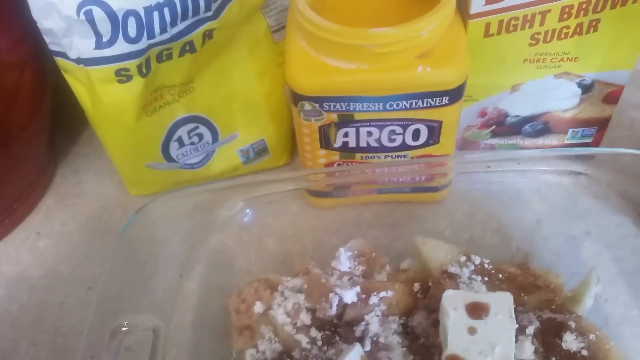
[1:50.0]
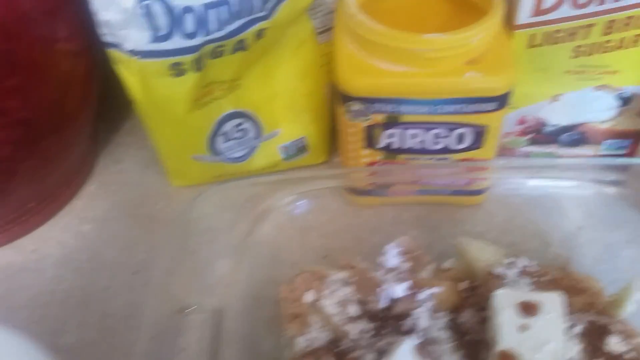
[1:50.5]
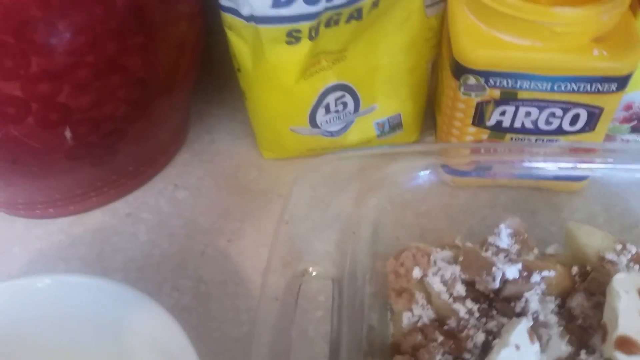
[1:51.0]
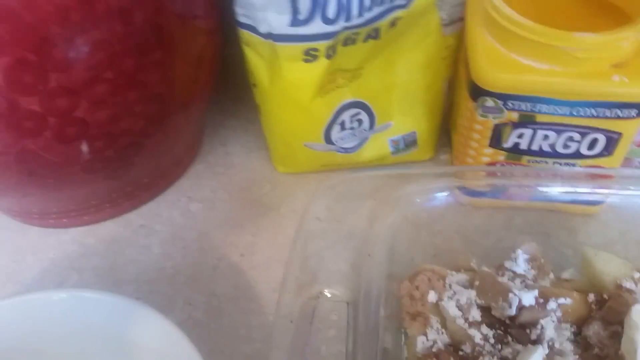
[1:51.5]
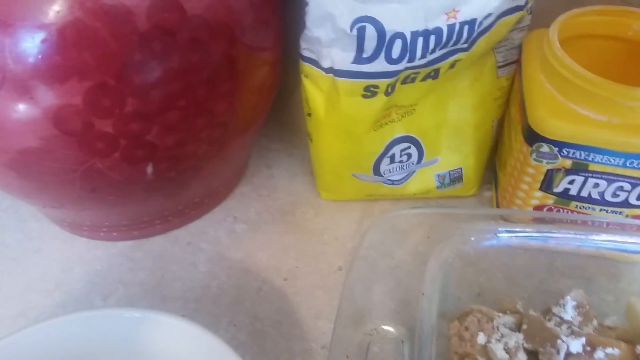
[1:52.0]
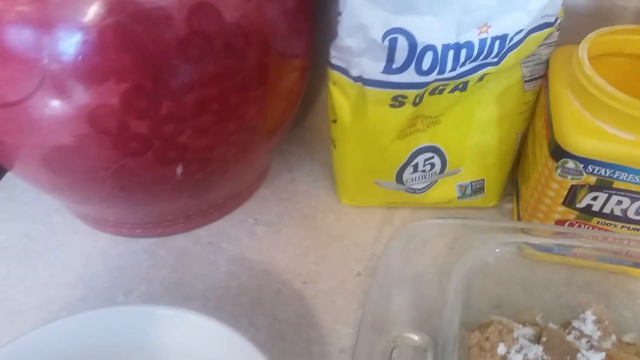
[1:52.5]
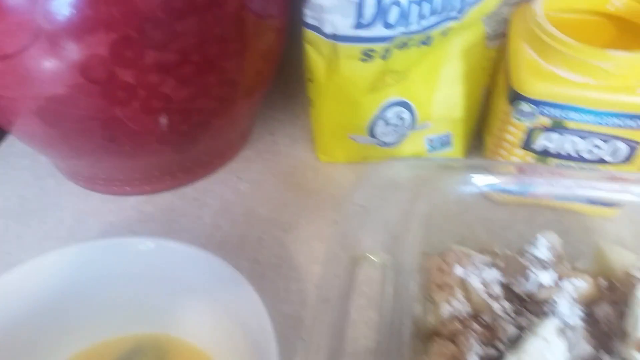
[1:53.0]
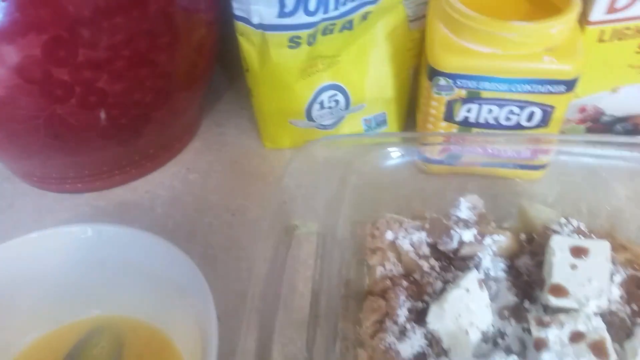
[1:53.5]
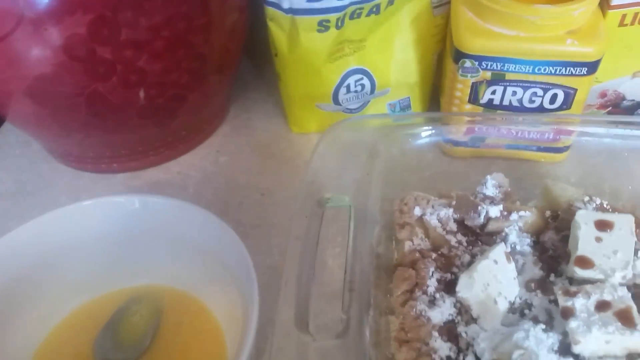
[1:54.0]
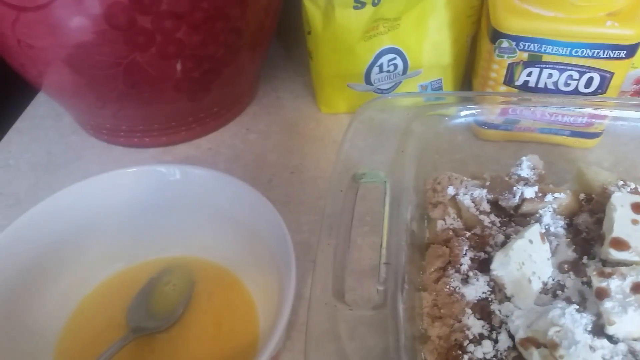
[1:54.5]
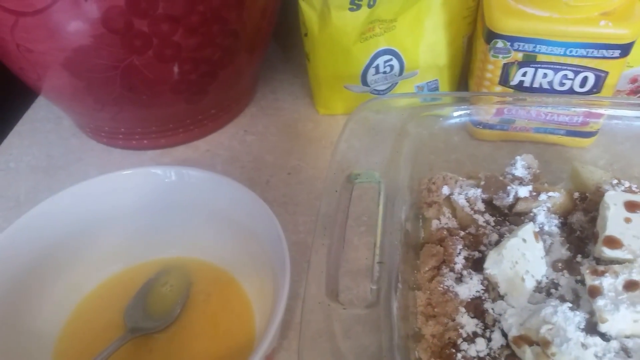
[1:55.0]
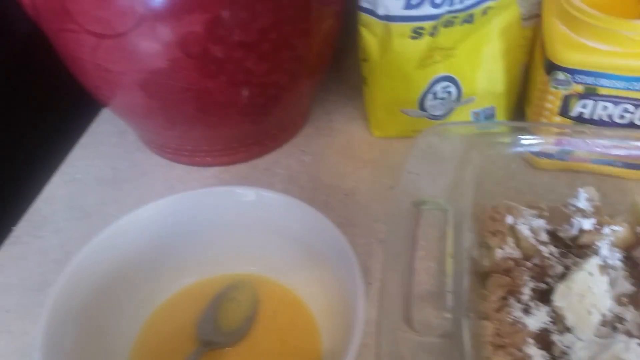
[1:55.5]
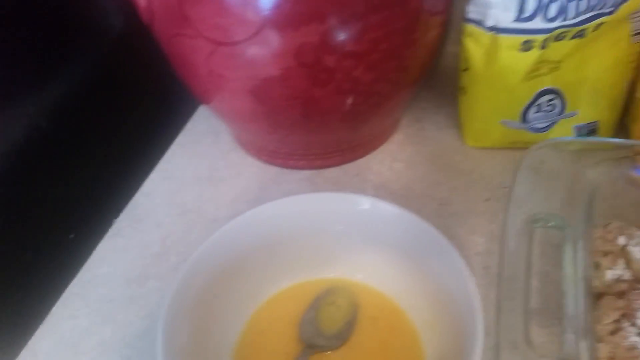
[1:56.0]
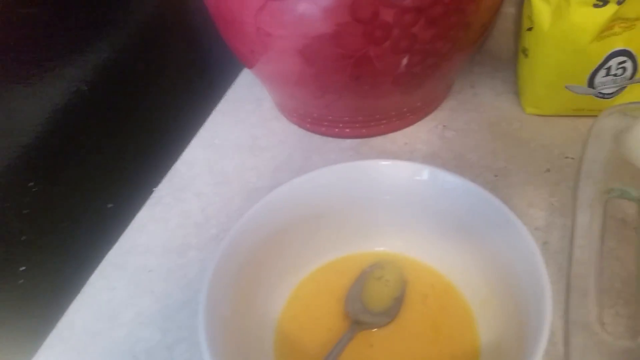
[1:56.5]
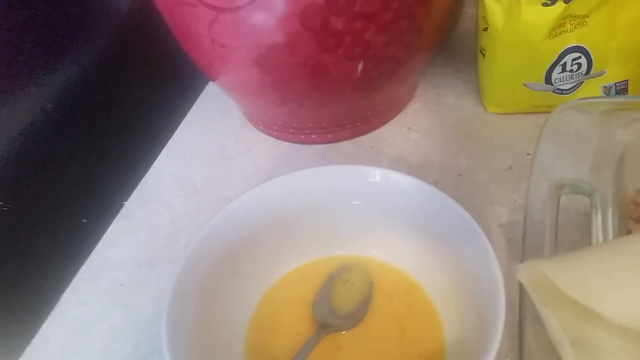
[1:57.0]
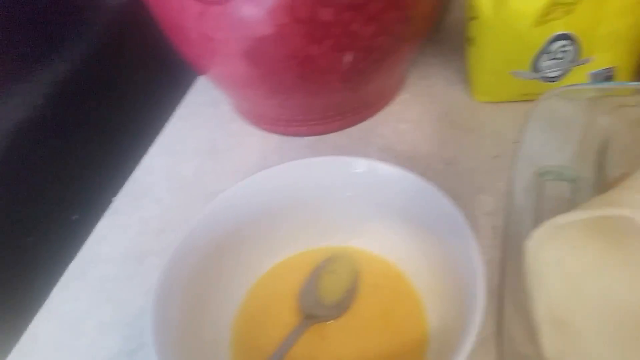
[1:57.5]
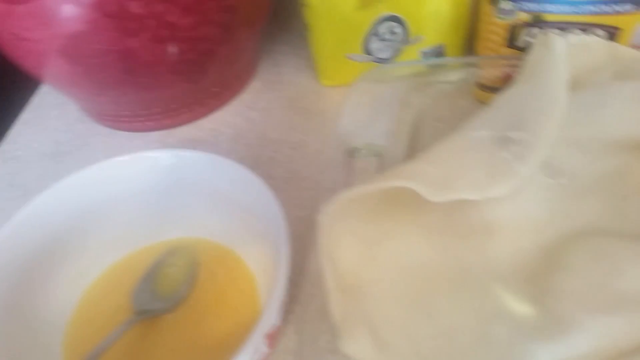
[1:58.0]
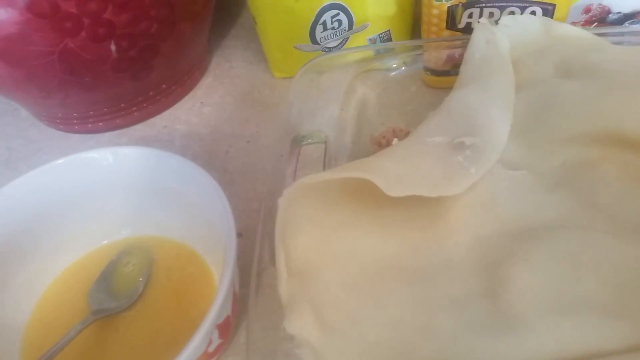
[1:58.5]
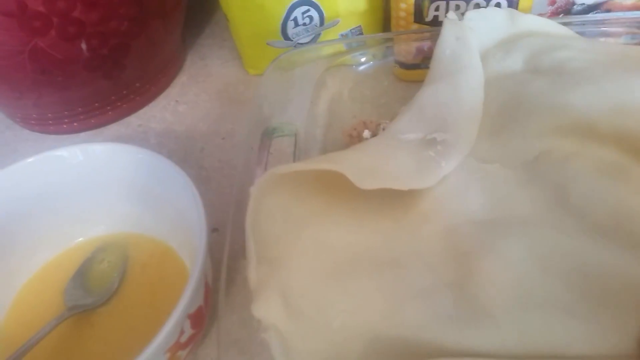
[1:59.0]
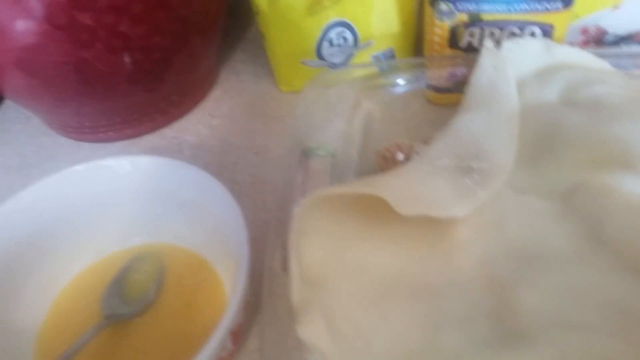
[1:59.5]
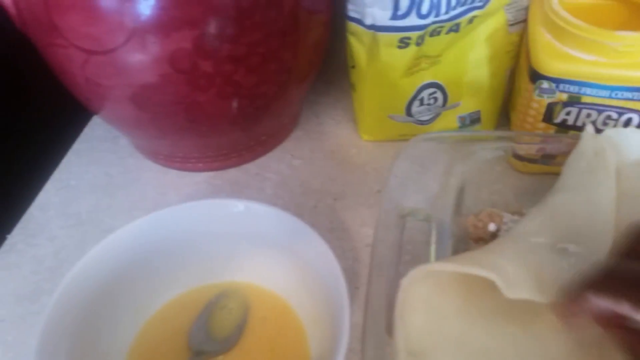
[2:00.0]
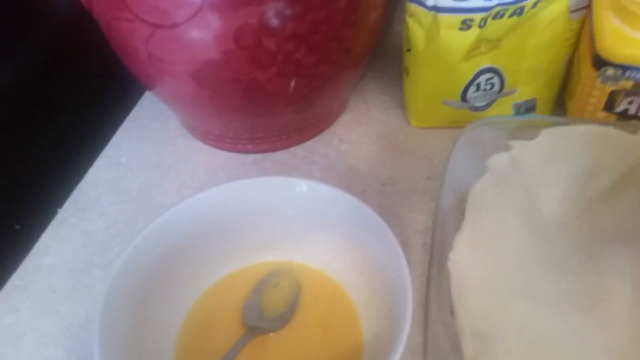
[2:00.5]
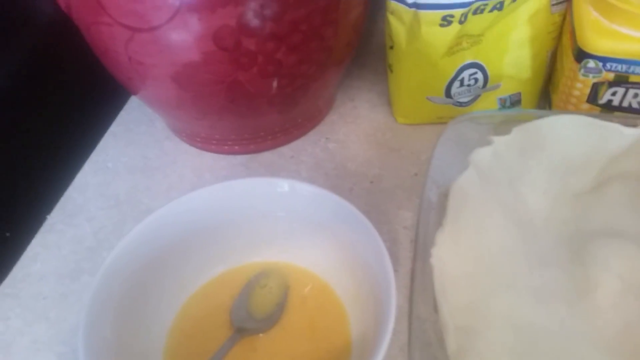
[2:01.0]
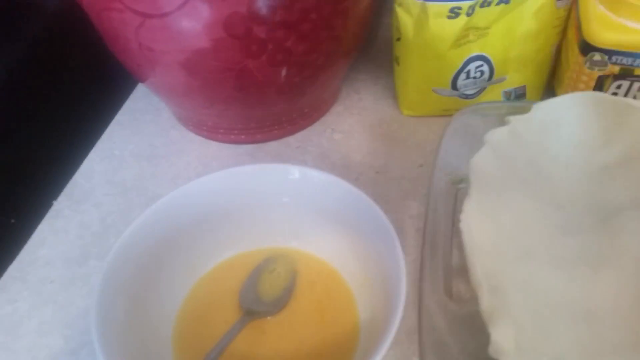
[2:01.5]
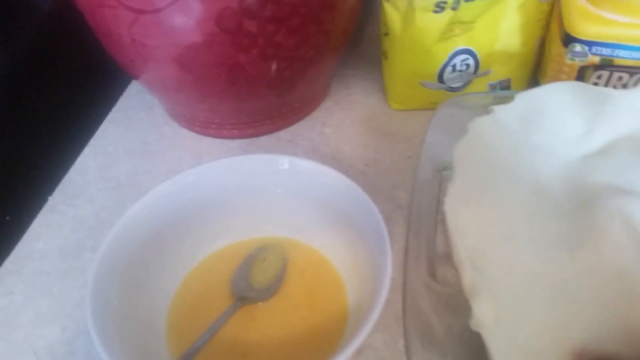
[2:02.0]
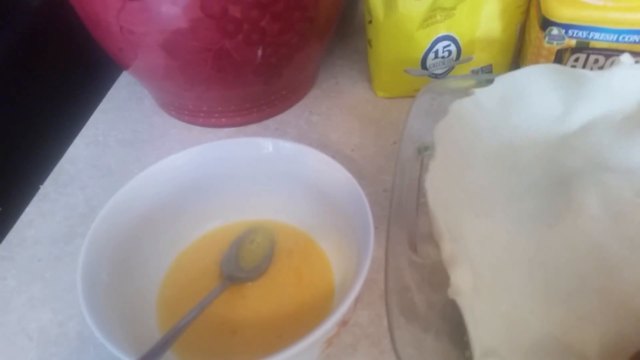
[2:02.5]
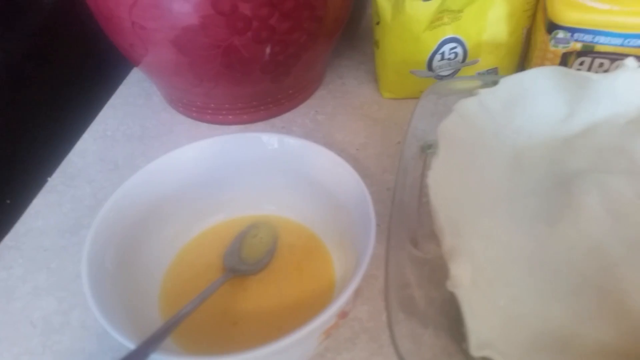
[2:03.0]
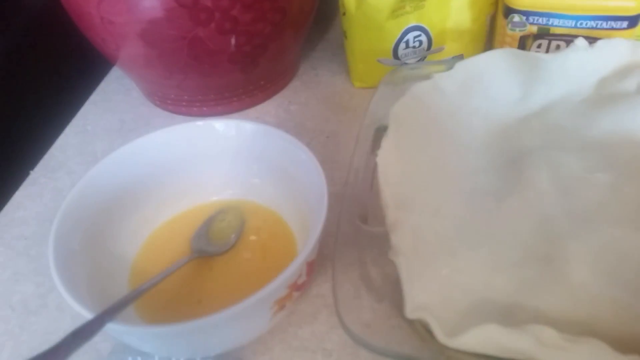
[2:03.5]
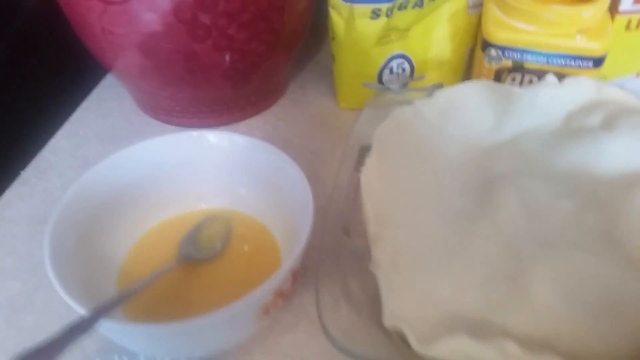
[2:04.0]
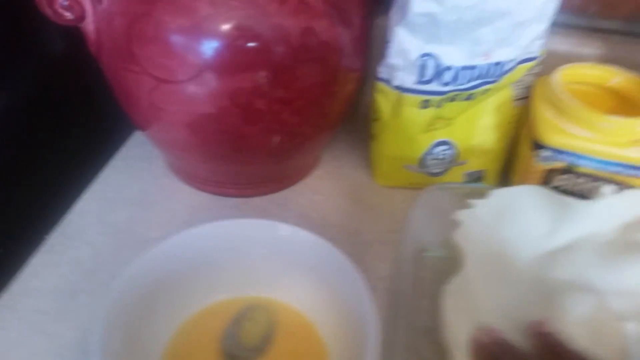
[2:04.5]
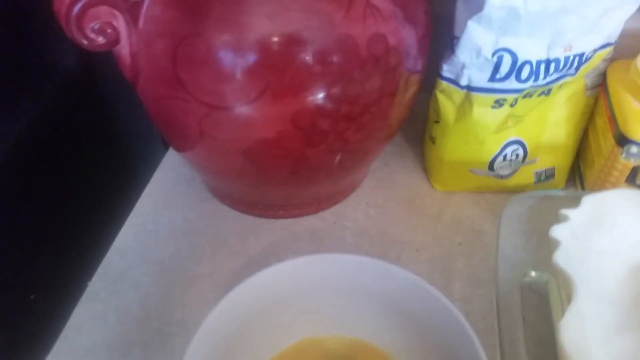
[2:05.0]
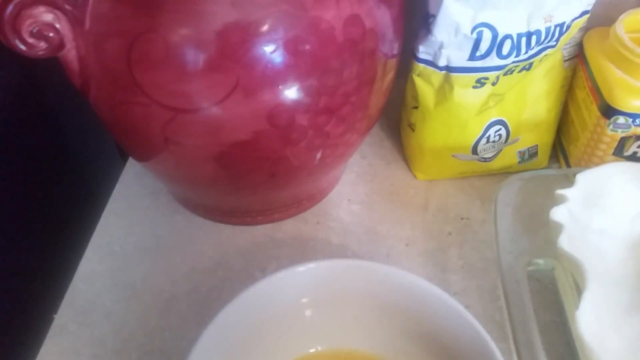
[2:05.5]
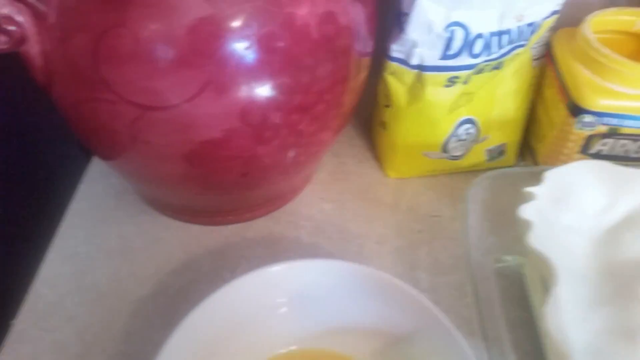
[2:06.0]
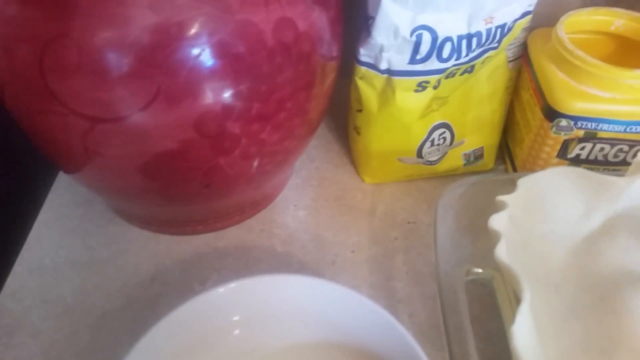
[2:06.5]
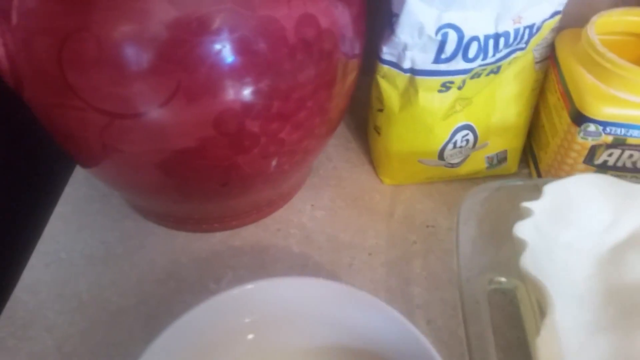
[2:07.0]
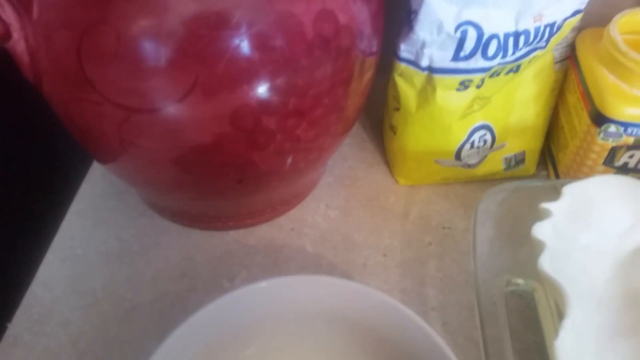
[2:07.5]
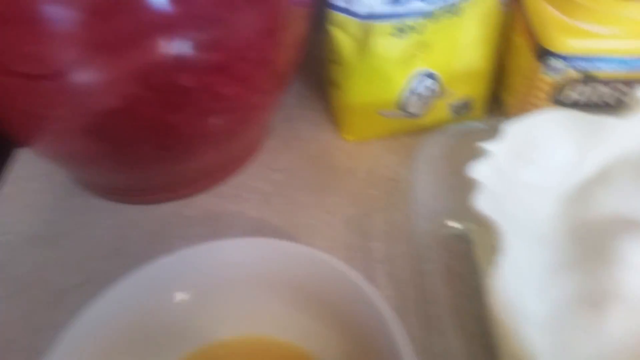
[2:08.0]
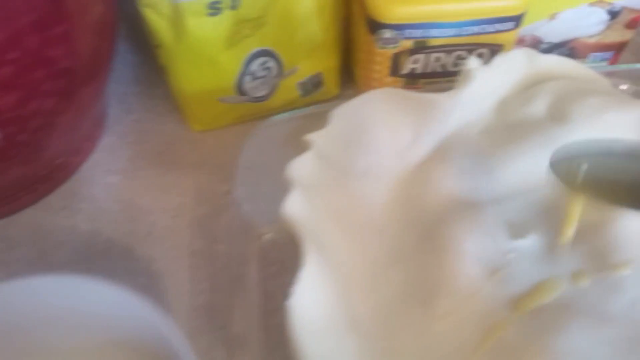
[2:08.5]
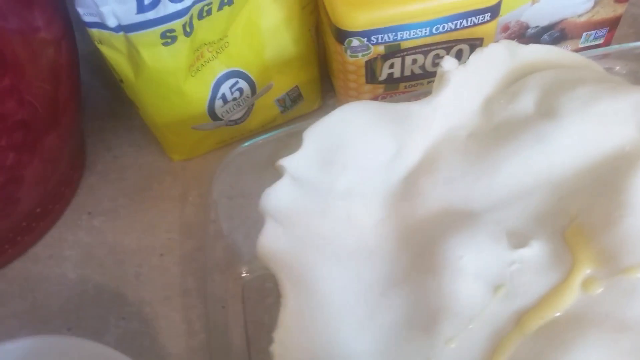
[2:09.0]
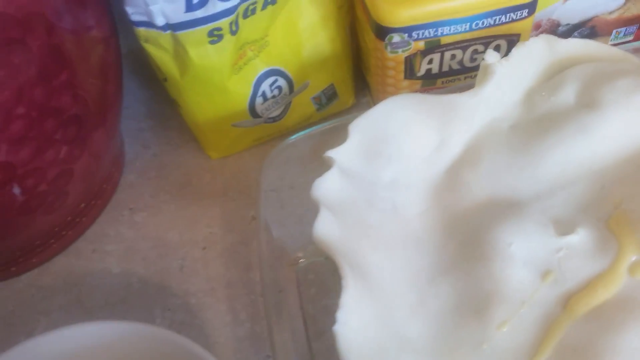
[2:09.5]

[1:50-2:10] The baking setup continues with eggs, sugar, apple, butter, vanilla drips, powdered baking soda or baking powder, and other ingredients in view. The individual then adds the pie sheet to the top of the glass dish in the kitchen-like setting. No other people or animals appear.